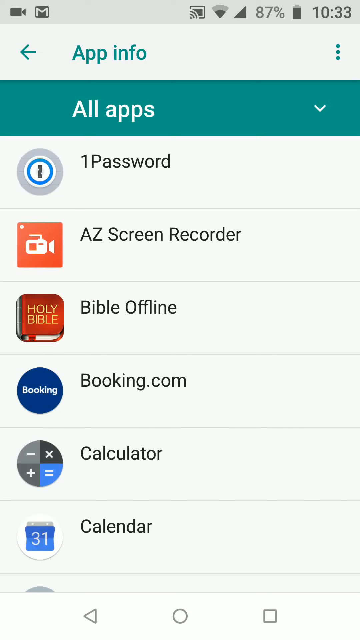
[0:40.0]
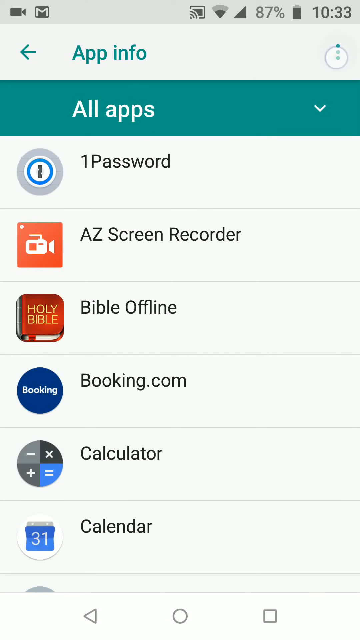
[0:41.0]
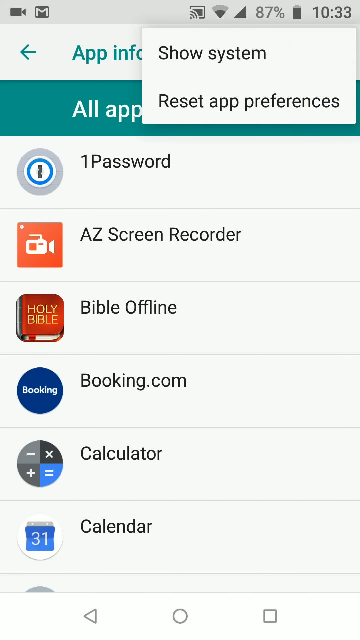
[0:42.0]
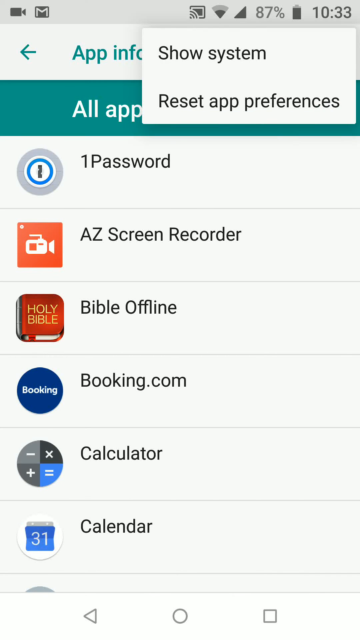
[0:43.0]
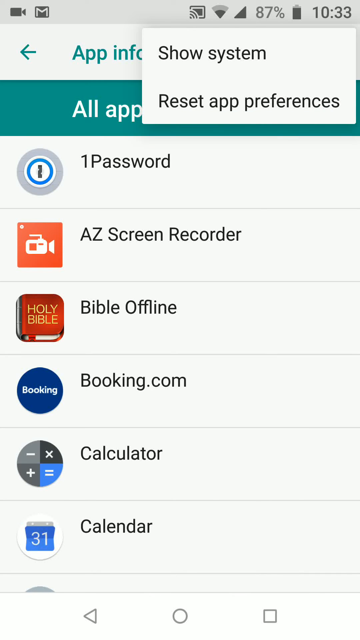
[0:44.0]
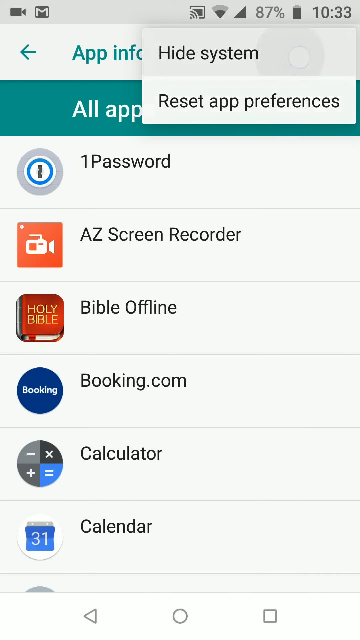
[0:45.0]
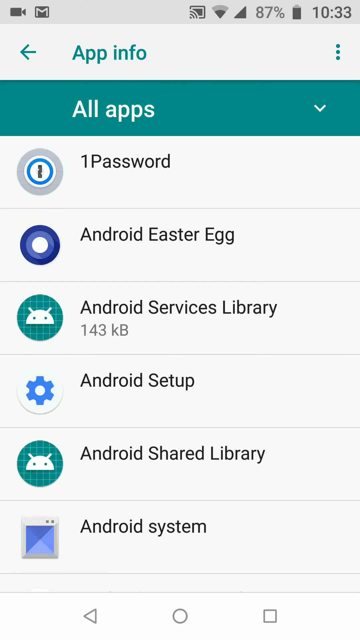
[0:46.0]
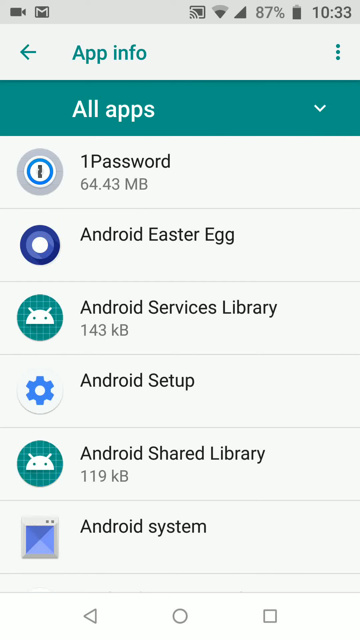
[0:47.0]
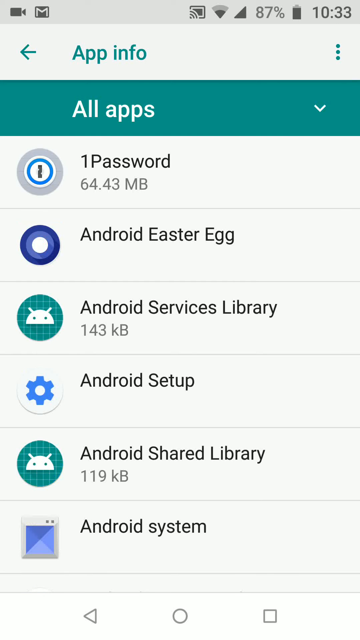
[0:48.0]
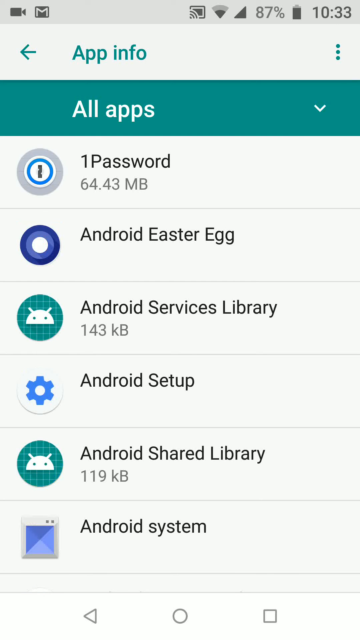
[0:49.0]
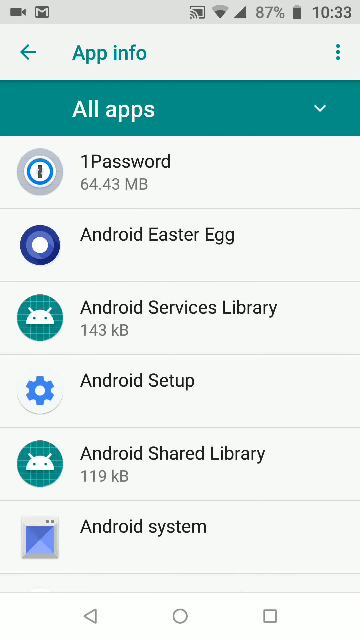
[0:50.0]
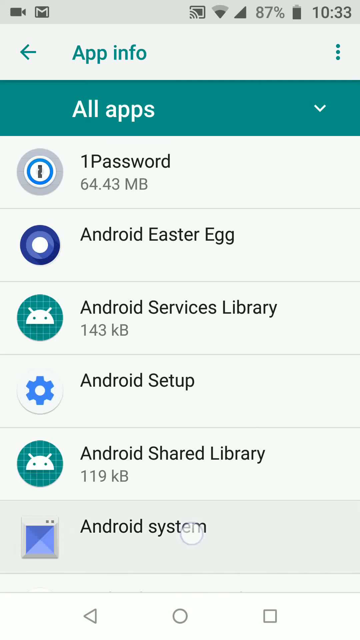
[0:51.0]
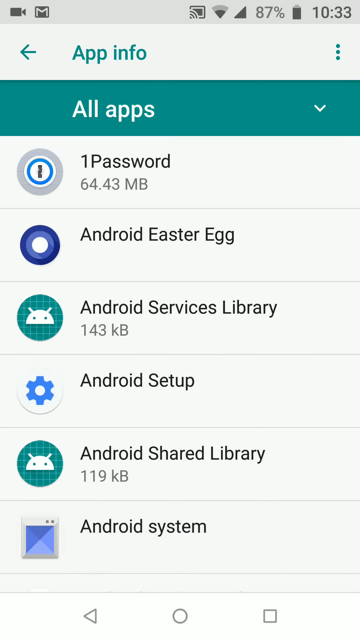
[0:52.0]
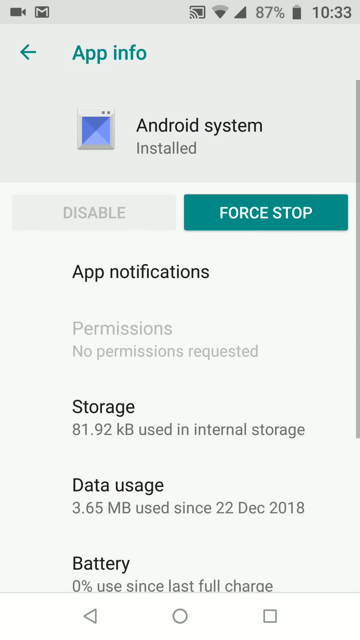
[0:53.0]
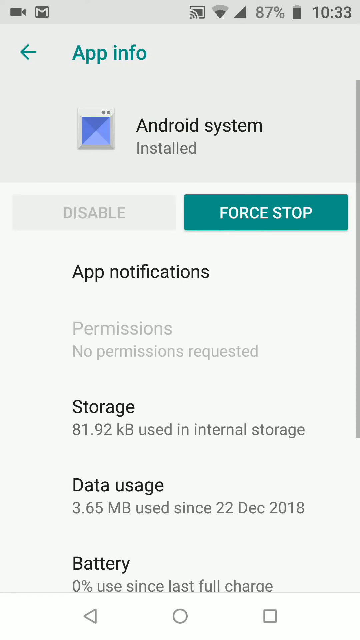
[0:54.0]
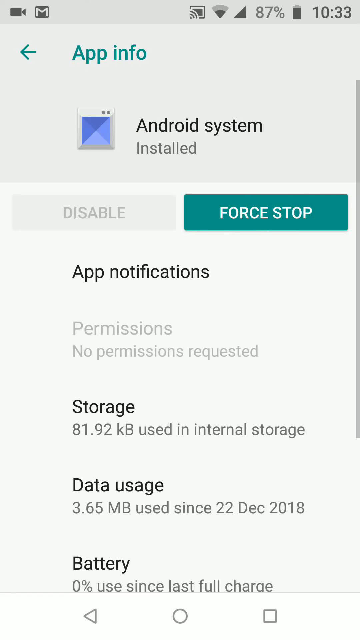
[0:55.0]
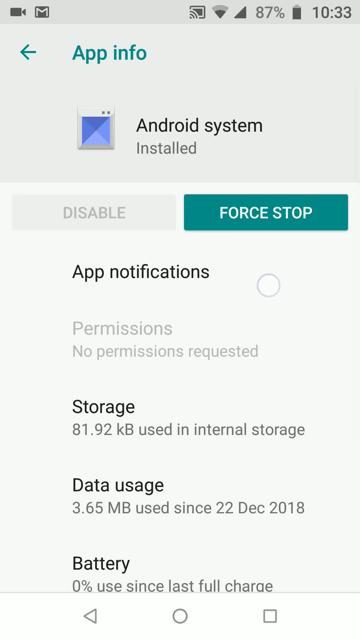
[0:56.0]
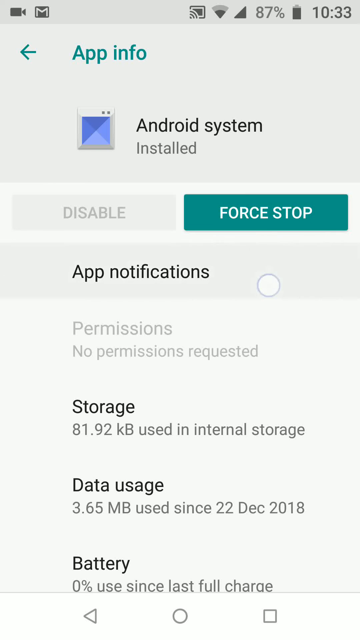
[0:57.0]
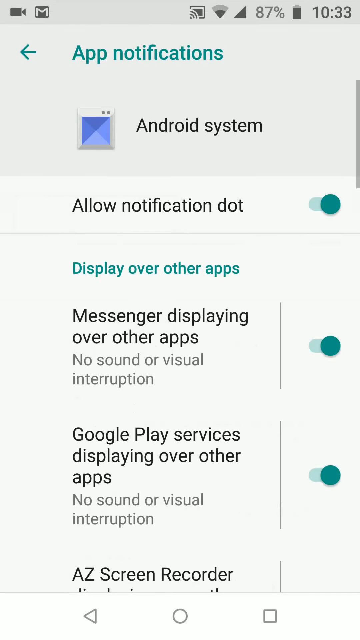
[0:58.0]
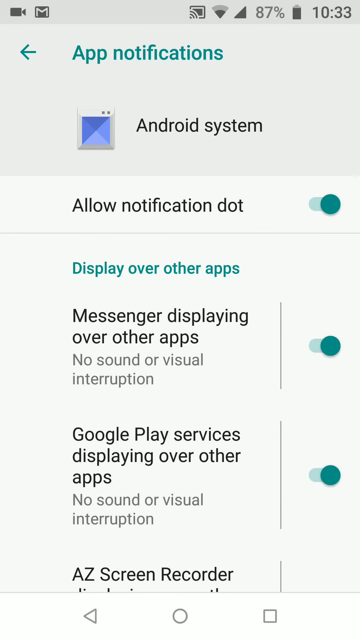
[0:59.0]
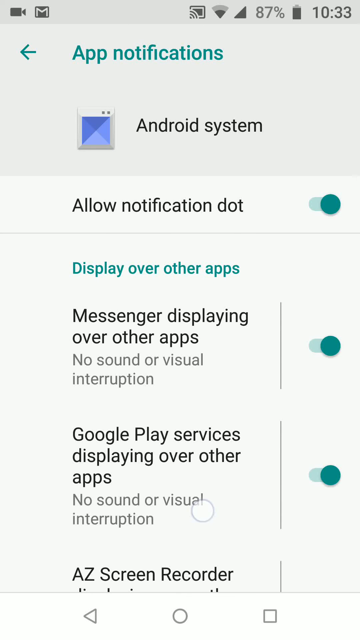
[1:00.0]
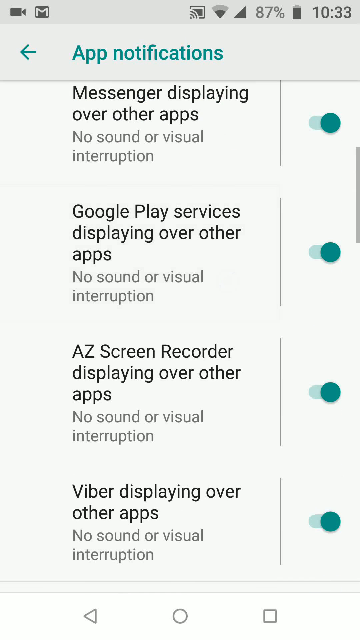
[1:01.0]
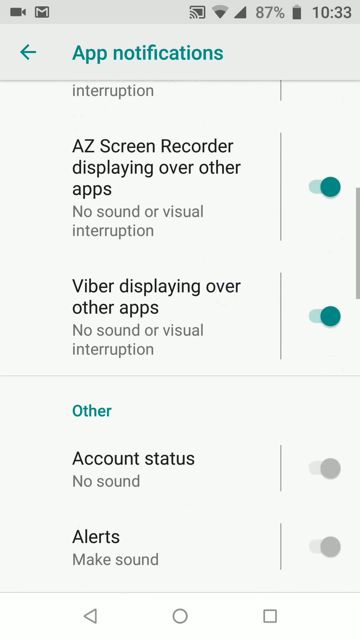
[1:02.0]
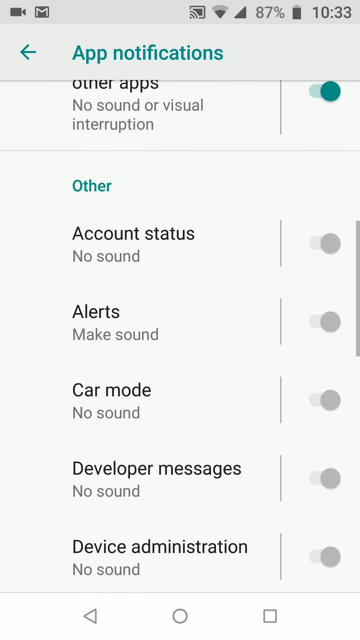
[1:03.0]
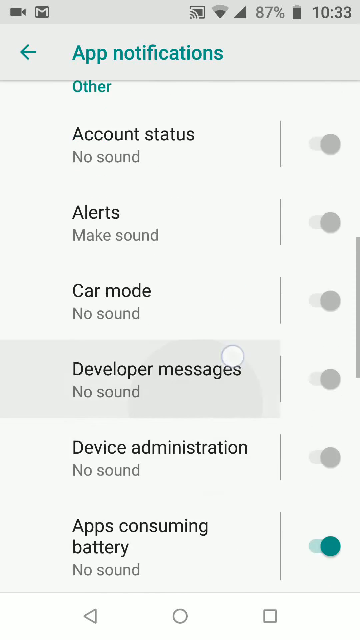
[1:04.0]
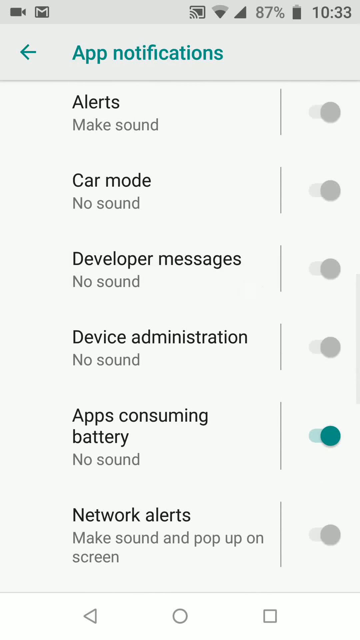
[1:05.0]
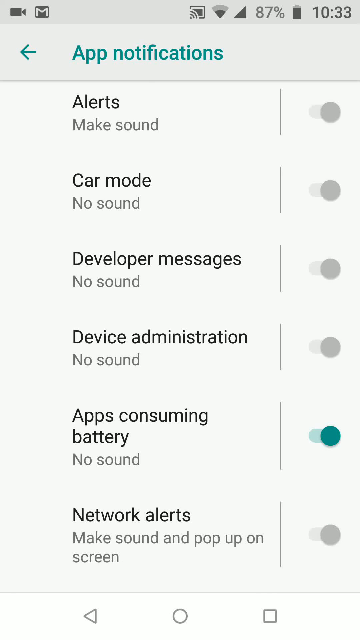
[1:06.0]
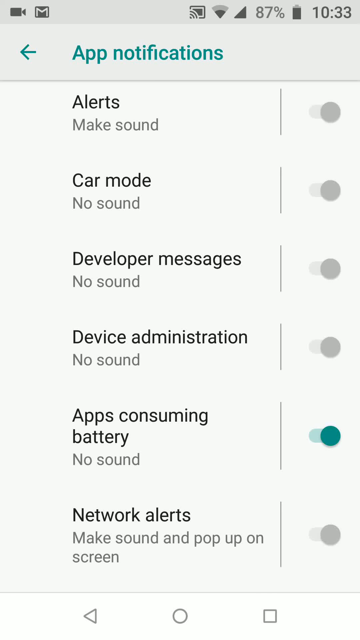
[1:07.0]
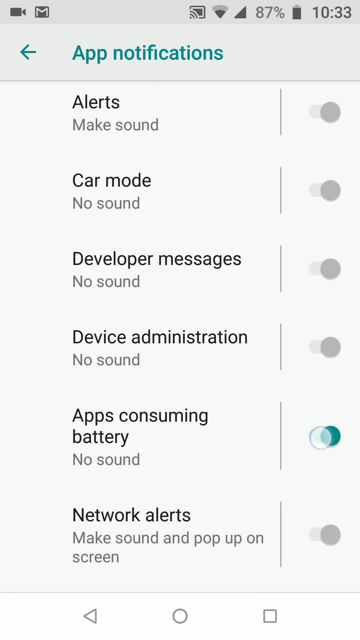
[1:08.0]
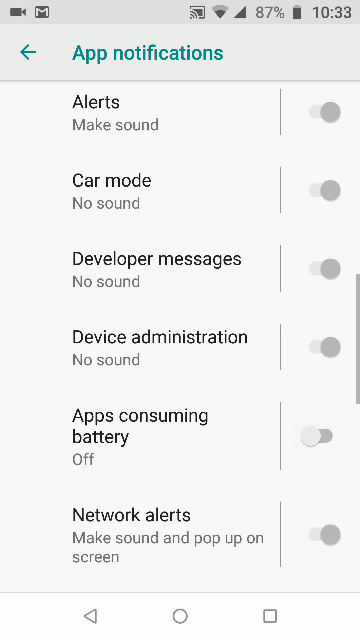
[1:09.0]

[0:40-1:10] The all apps list in the app info menu of the Android settings is still shown. The user taps a three-dots icon next to app info, opening a drop-down menu with an option to show the Android system apps that are normally not visible. The user taps it, and the button instantly changes to "hide system". Now able to see the system apps, the user scrolls down and selects one called "Android system", which opens that app's details. The user taps an area that says "app notifications", bringing up all the notification settings for this app. Scrolling down, each notification criterion has a toggle button like a slider, and the user slides the one that says "app consuming battery" to turn it off.